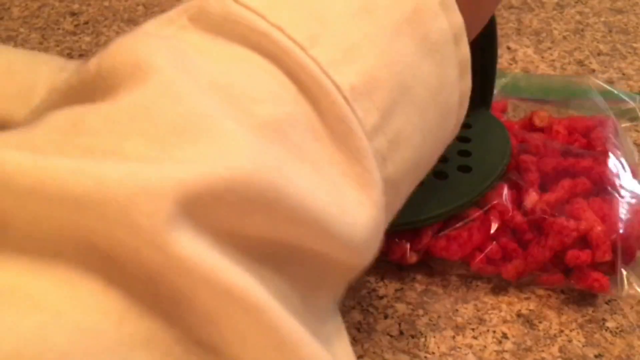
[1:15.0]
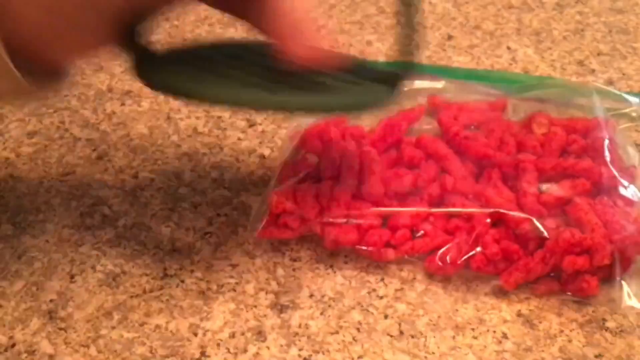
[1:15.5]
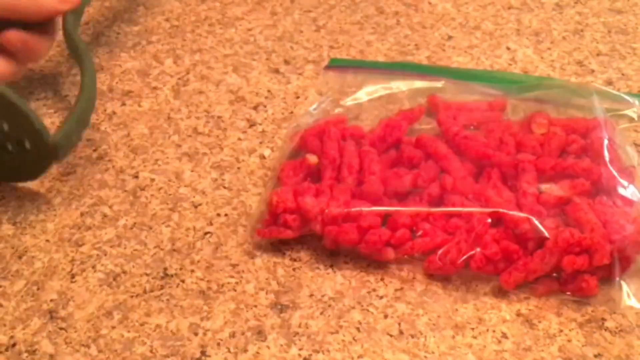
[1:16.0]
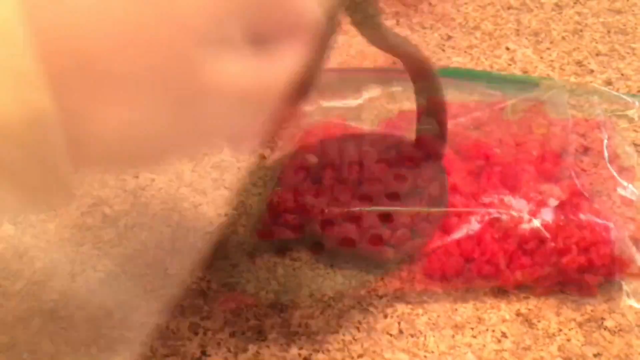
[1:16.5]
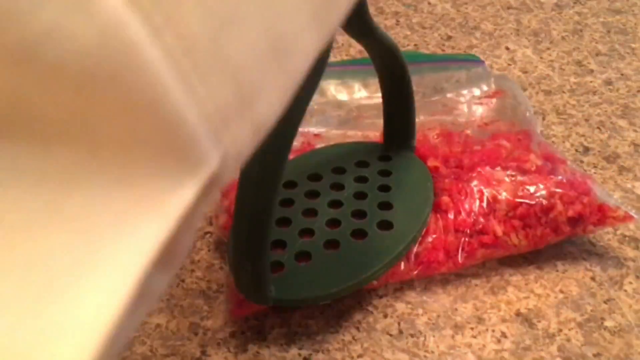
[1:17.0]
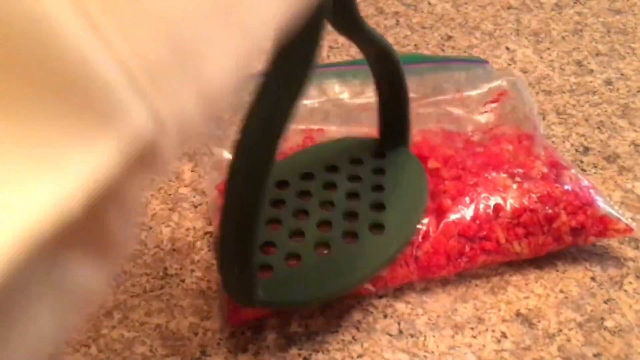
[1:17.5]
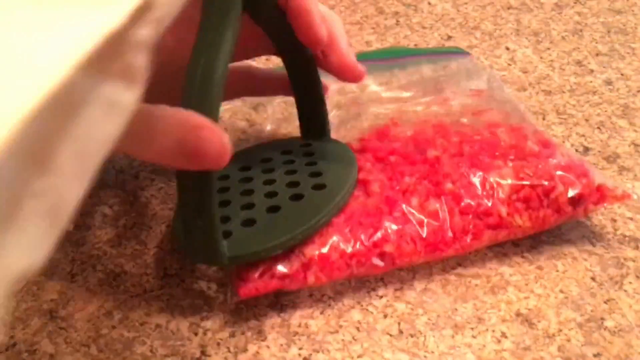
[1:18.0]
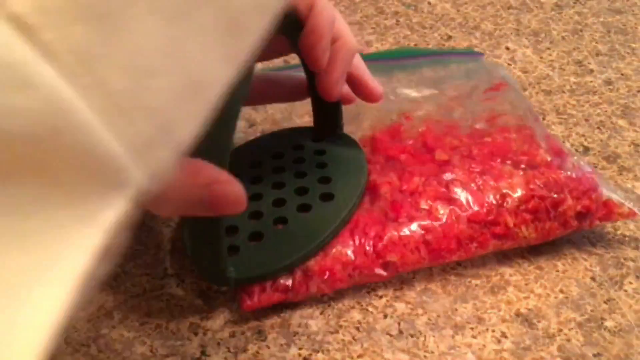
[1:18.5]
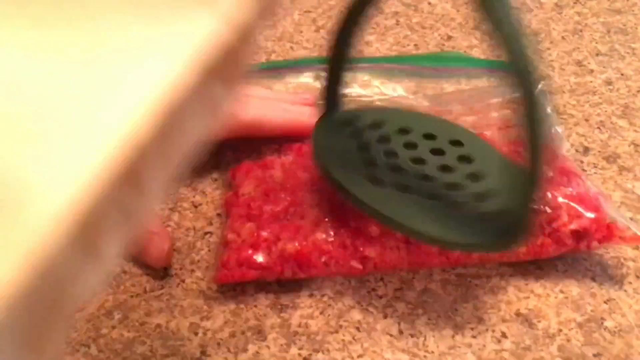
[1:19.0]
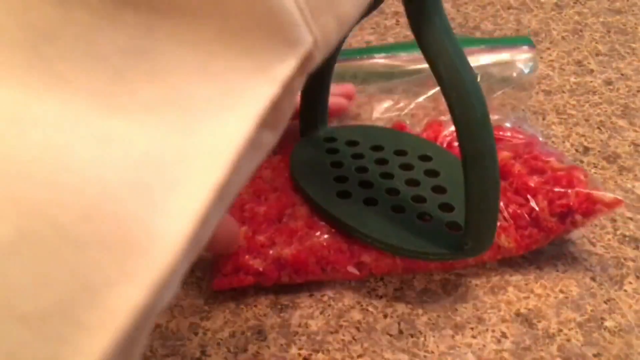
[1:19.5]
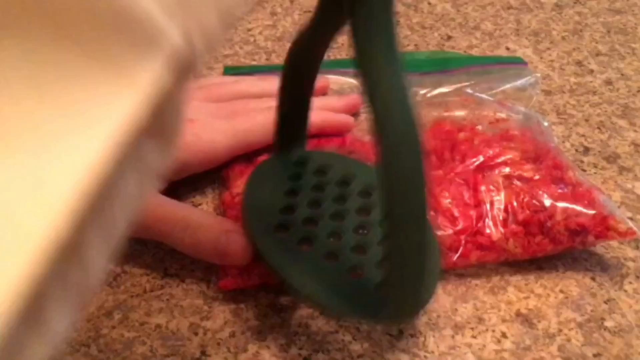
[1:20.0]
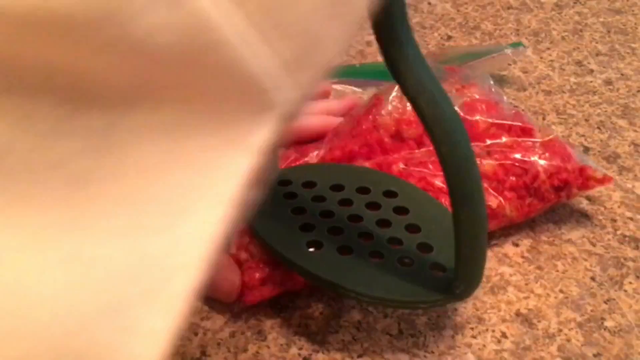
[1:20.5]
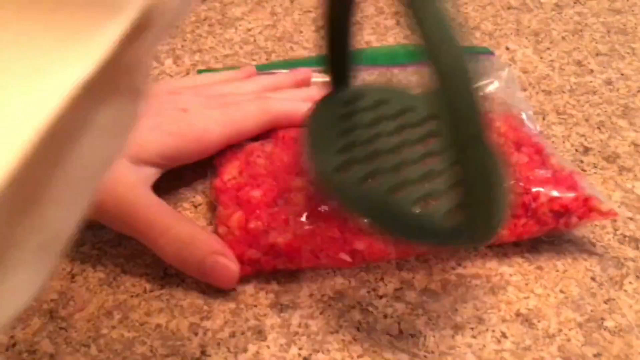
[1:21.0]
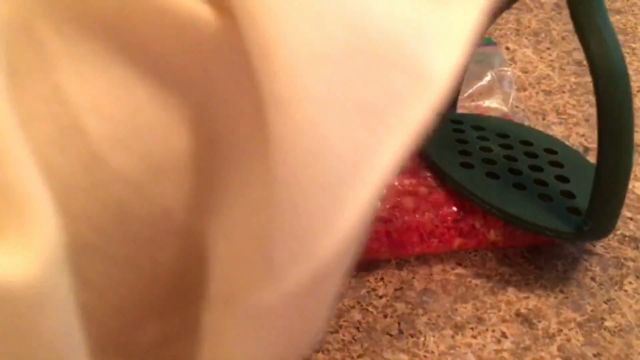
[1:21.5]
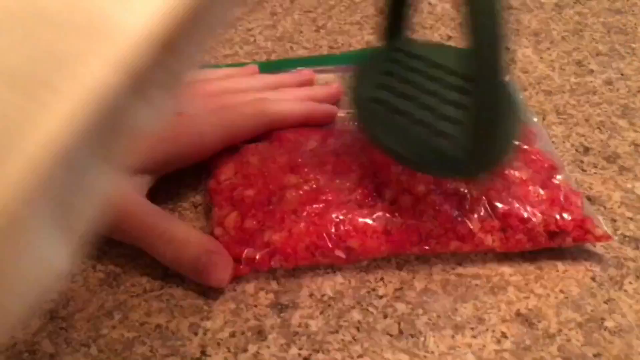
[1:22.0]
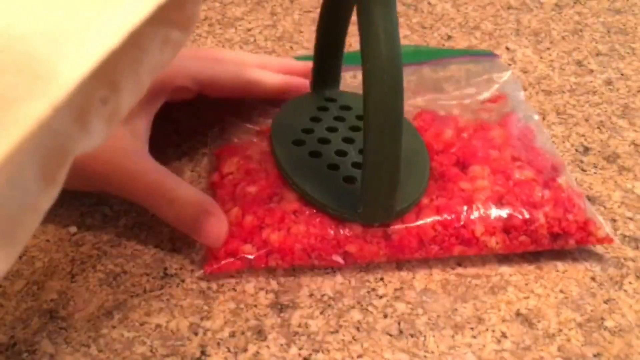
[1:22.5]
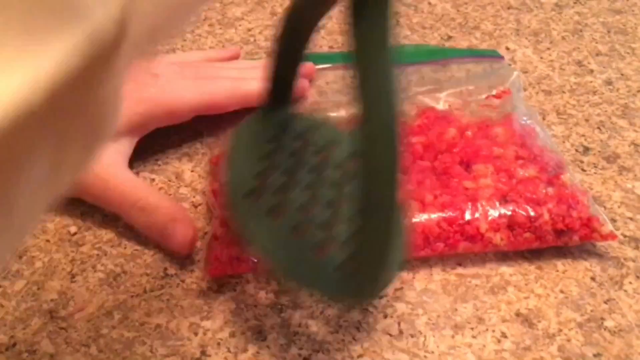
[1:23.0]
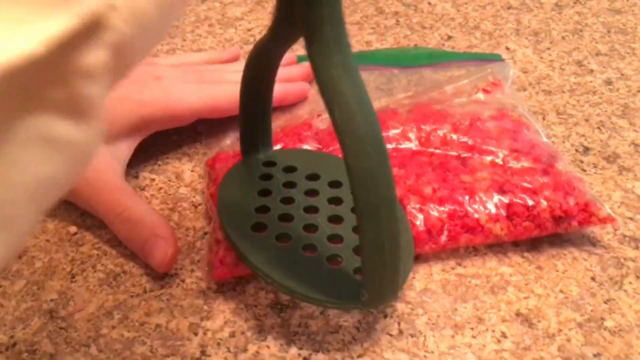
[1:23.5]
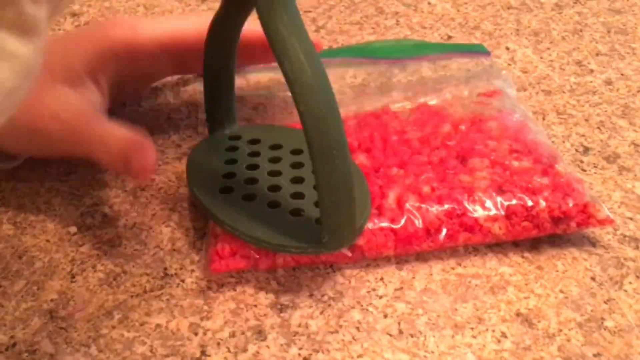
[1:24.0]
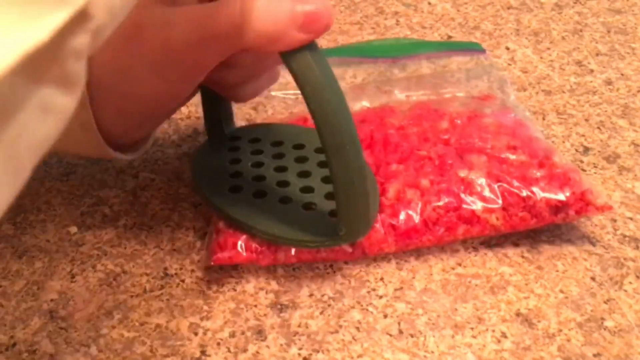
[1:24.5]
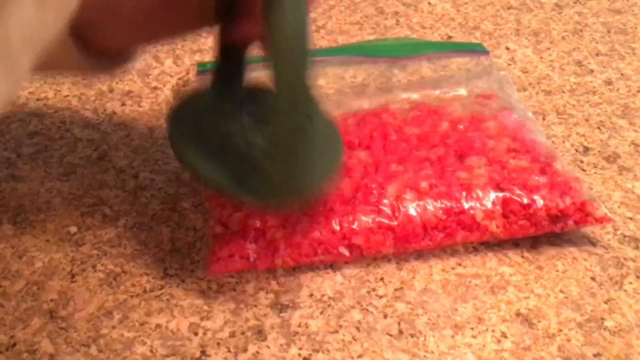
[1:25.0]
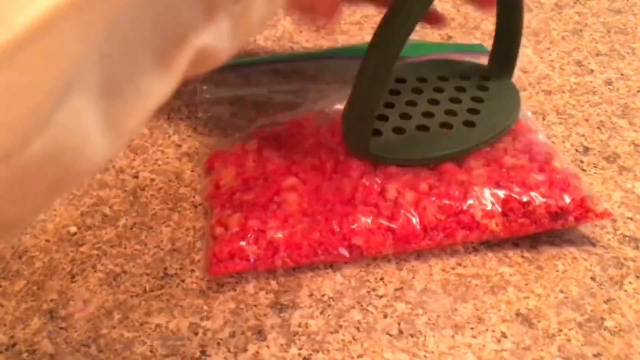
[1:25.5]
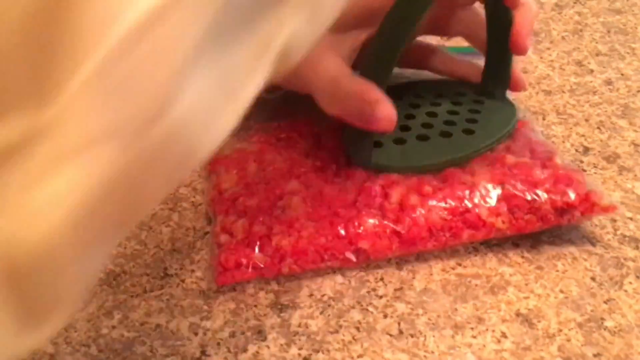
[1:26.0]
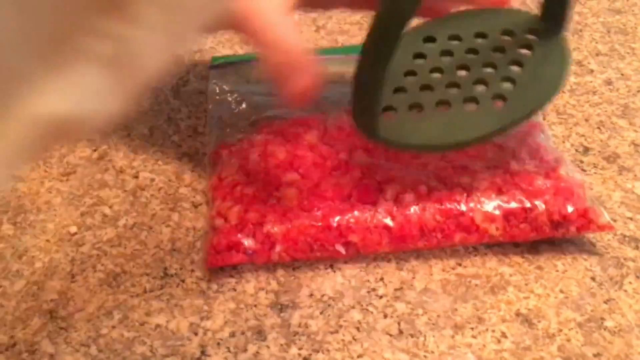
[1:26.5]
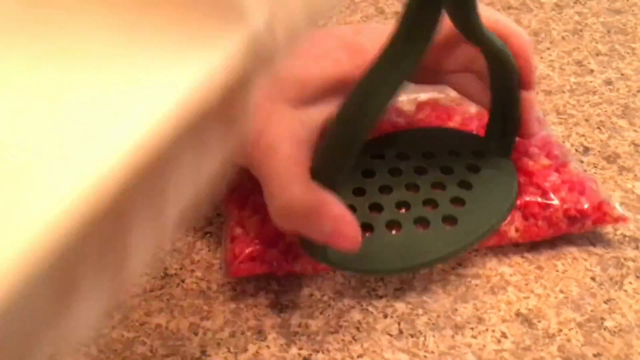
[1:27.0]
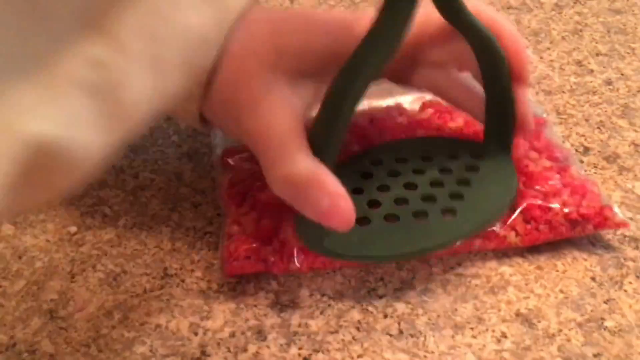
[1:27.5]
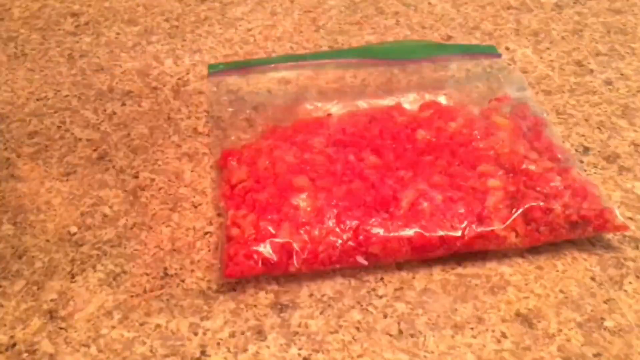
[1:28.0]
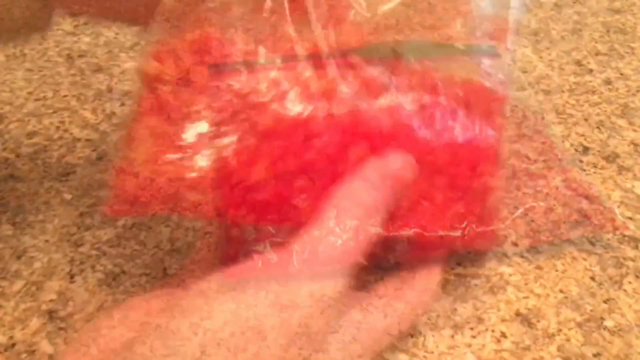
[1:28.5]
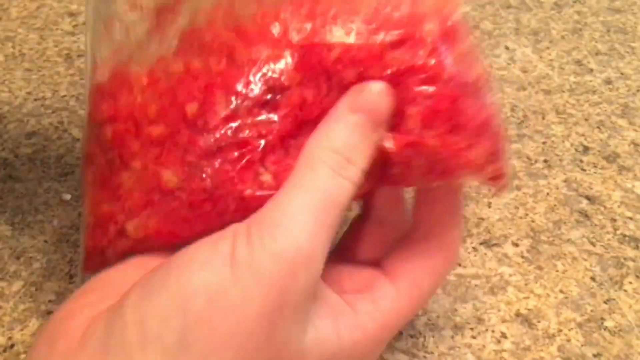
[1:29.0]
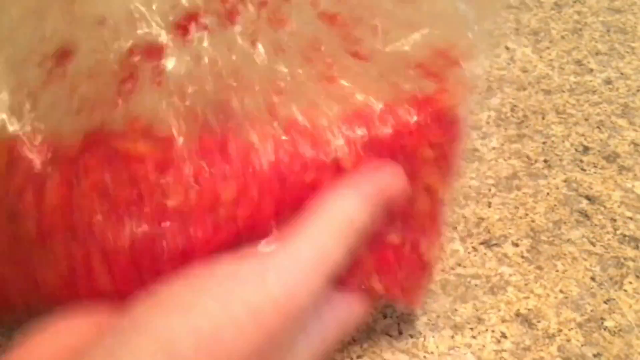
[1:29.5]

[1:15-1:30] The same person keeps smashing the flaming red hot Cheetos, placing the potato ricer on several different areas of the bag so that they all get crushed. They use two hands, one holding the top and one pressing down on the masher's two side handles. The person's shirt gets in the way of the view of the bag. The Cheetos look more crushed and crumbly, more like breadcrumbs. All that is visible in the shot is the sandwich bag of smashed Cheetos on the counter, the person's hands and one arm. After smashing it a lot, they pick up the bag, turn it over, shake it, and show it to the camera.